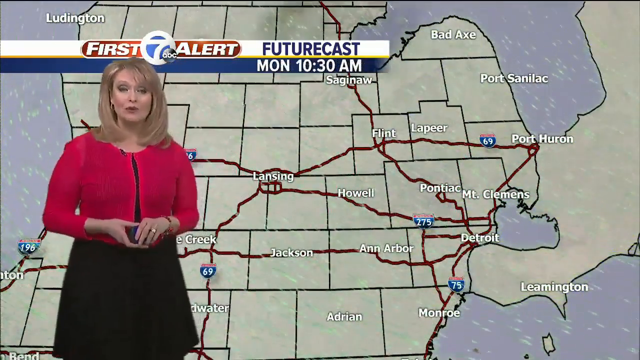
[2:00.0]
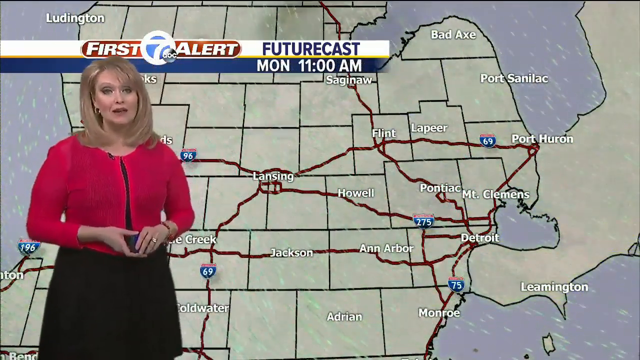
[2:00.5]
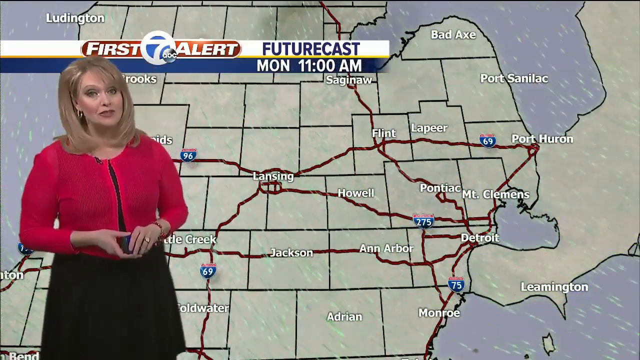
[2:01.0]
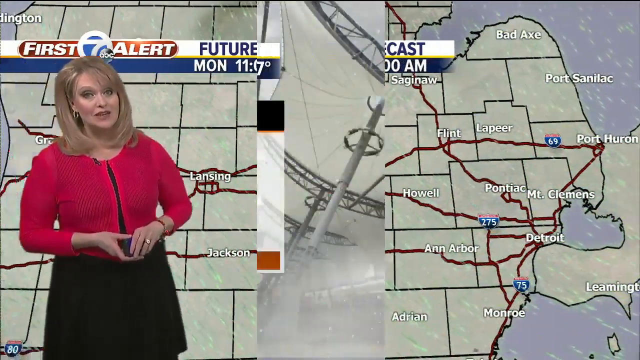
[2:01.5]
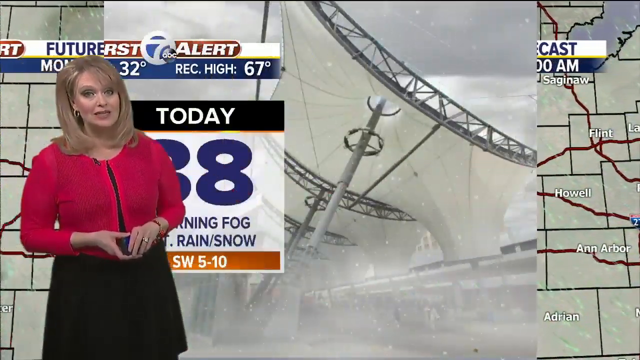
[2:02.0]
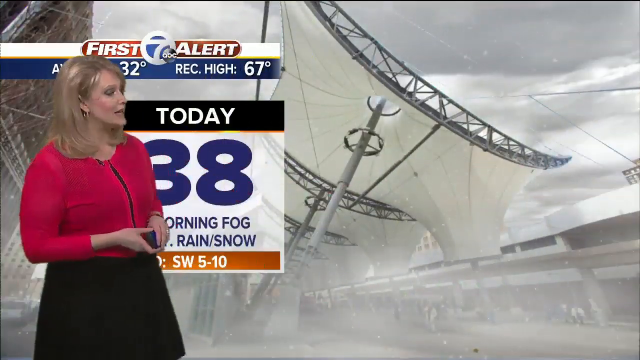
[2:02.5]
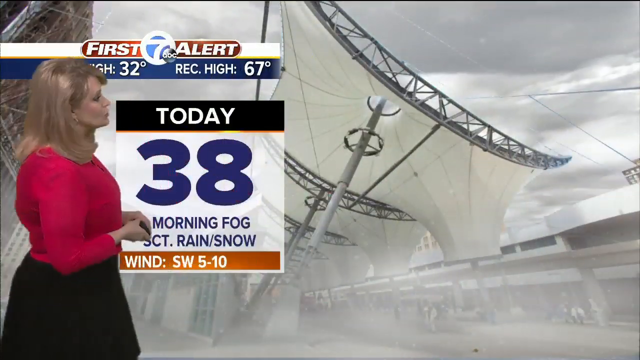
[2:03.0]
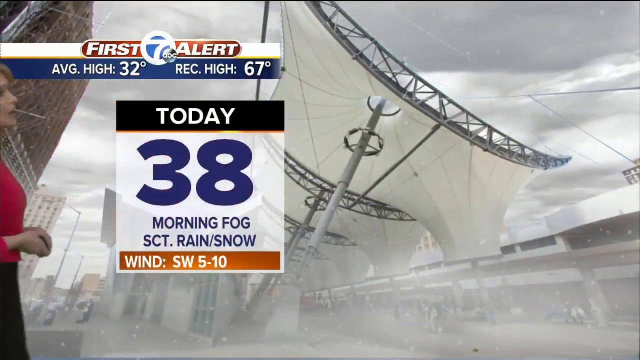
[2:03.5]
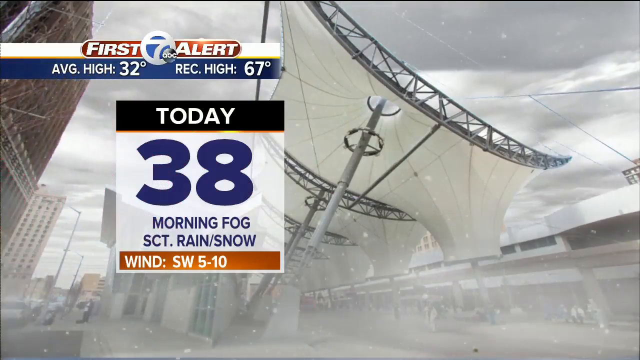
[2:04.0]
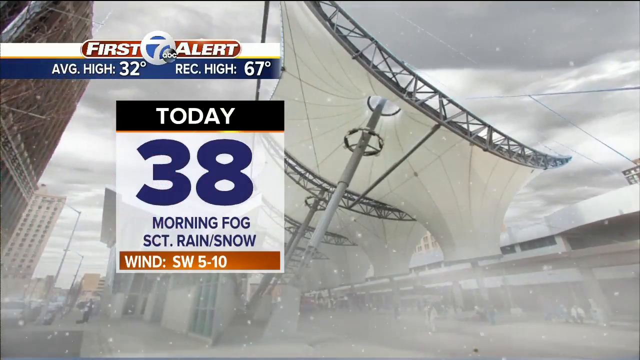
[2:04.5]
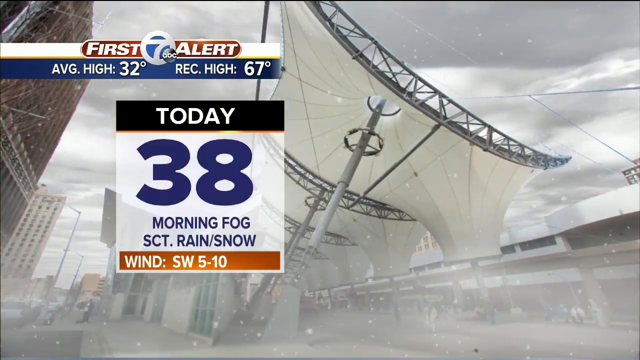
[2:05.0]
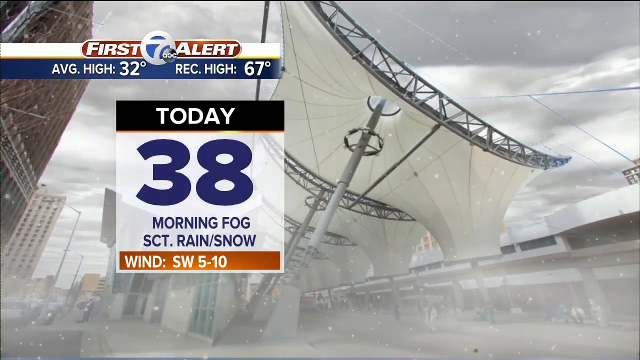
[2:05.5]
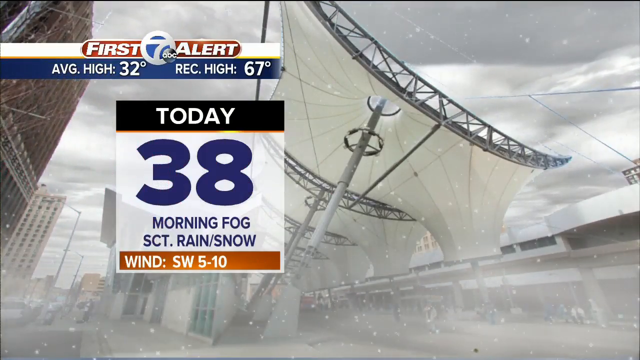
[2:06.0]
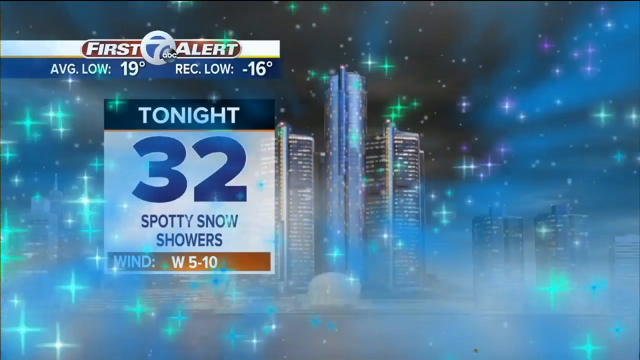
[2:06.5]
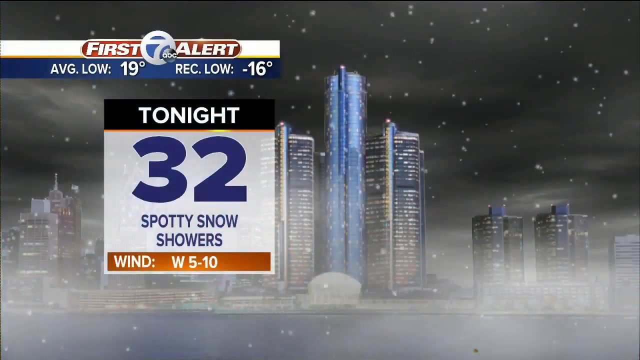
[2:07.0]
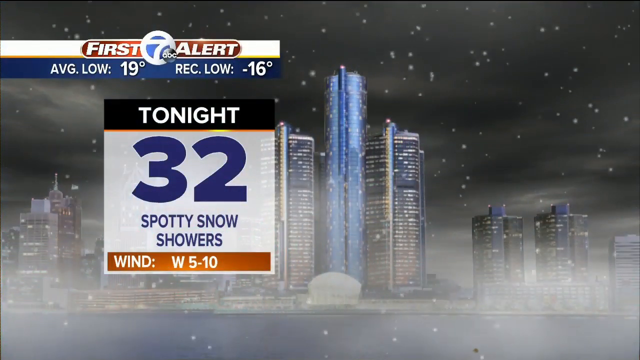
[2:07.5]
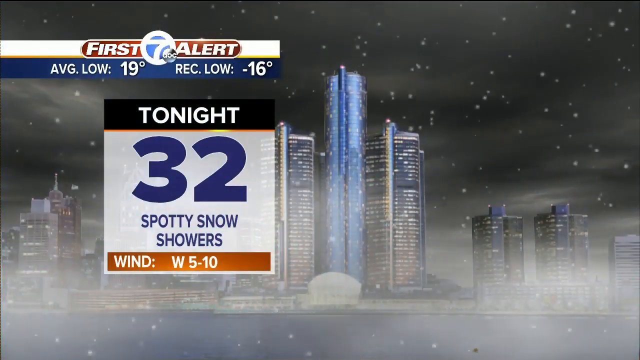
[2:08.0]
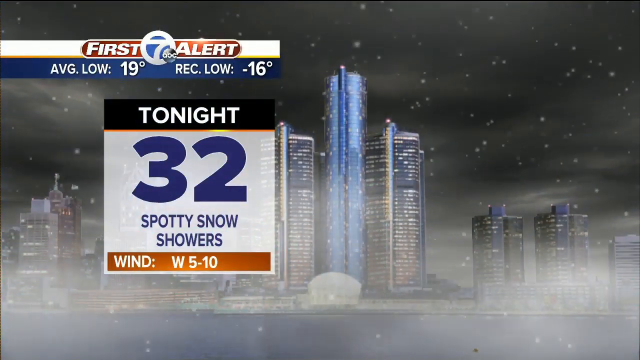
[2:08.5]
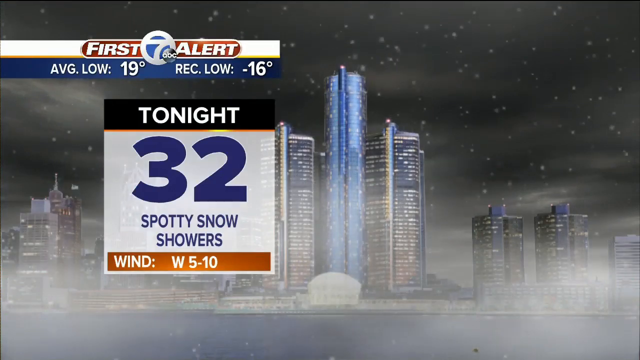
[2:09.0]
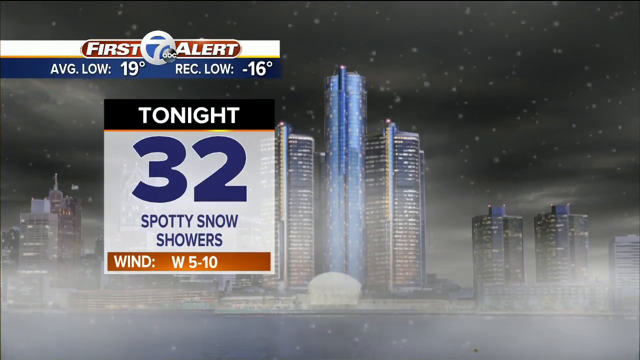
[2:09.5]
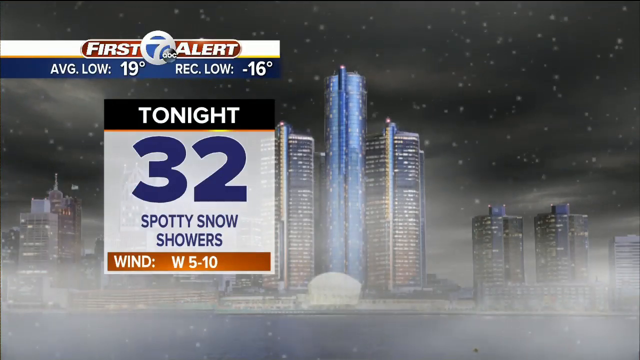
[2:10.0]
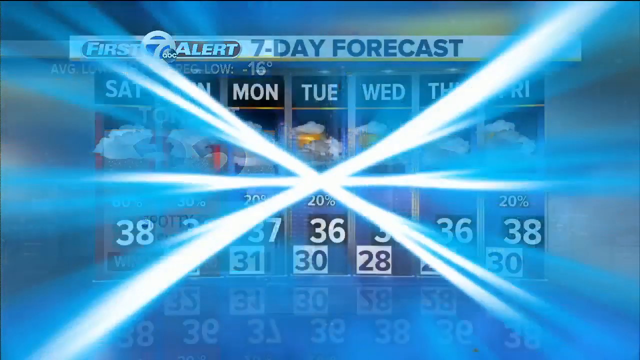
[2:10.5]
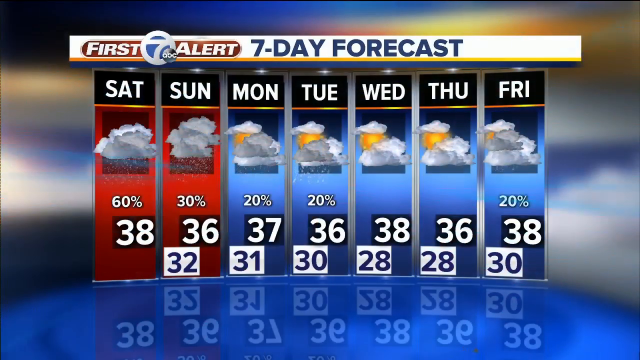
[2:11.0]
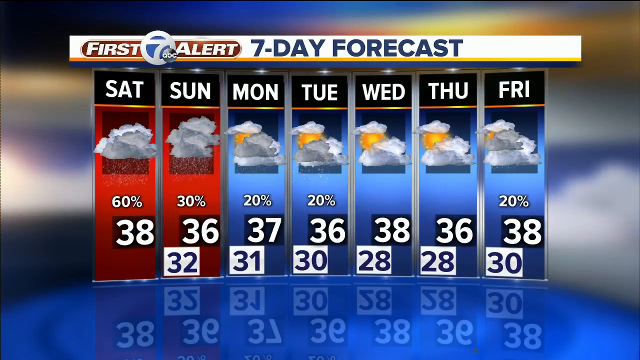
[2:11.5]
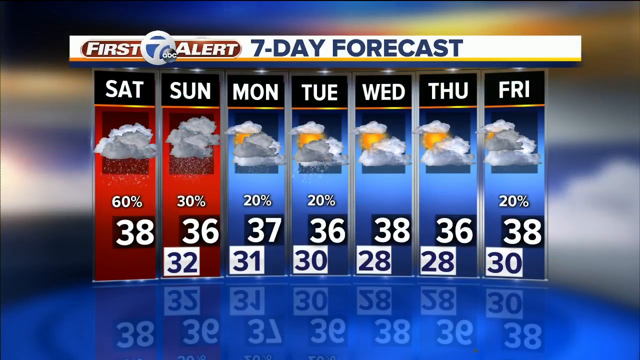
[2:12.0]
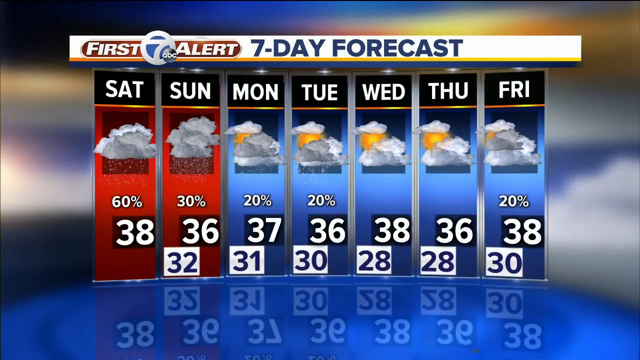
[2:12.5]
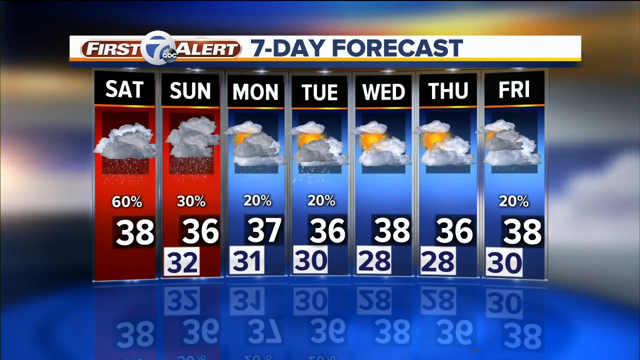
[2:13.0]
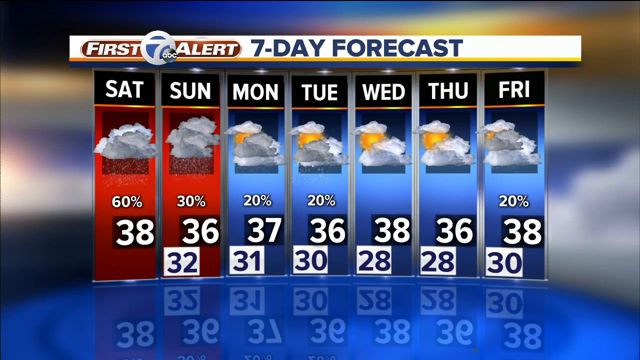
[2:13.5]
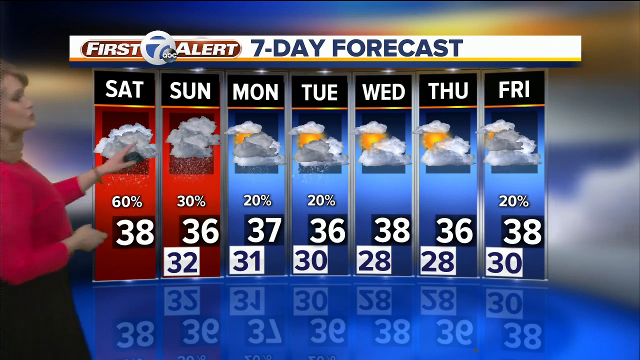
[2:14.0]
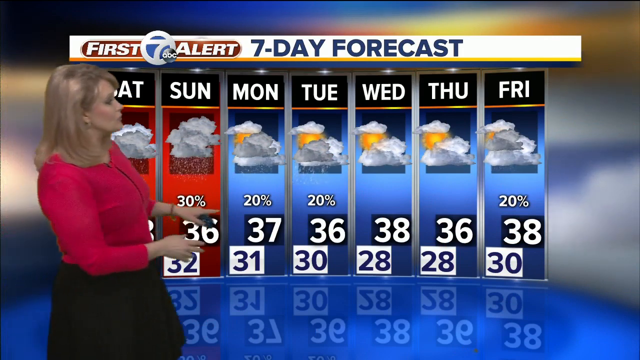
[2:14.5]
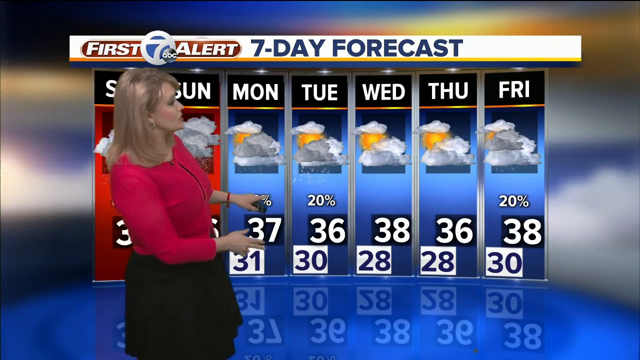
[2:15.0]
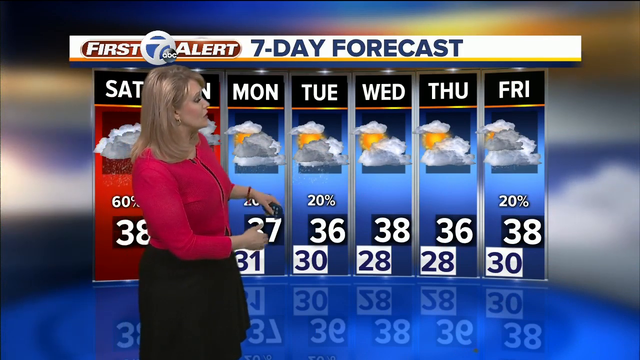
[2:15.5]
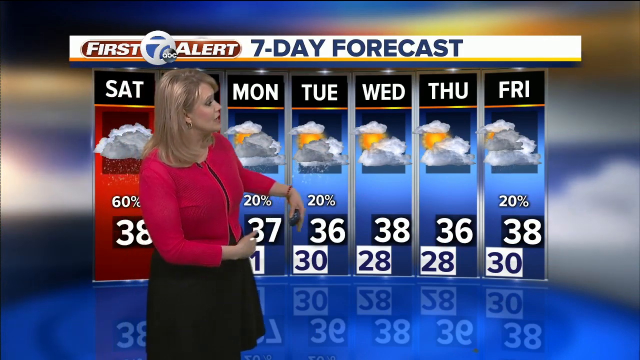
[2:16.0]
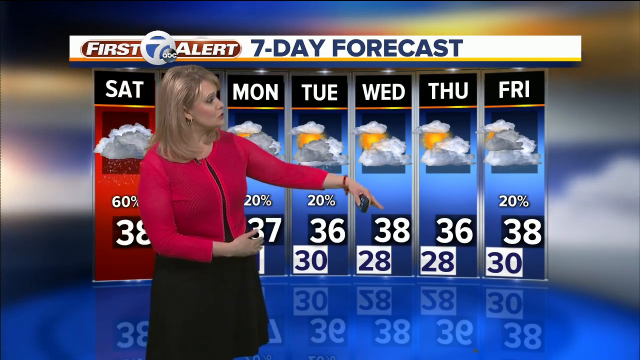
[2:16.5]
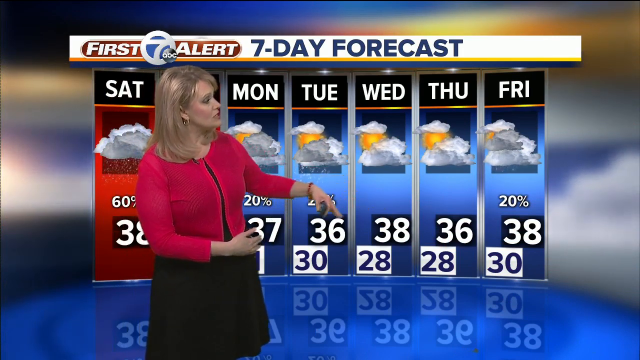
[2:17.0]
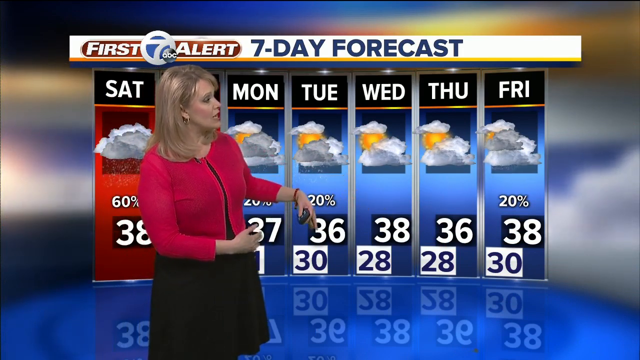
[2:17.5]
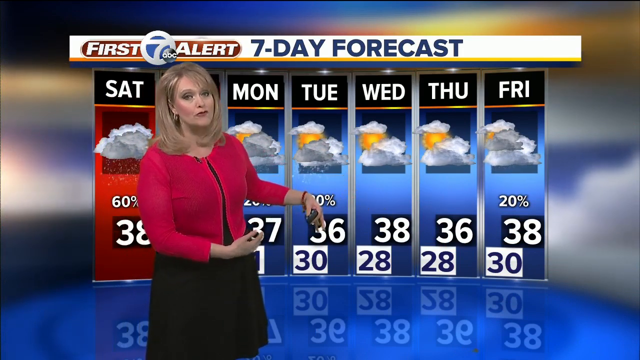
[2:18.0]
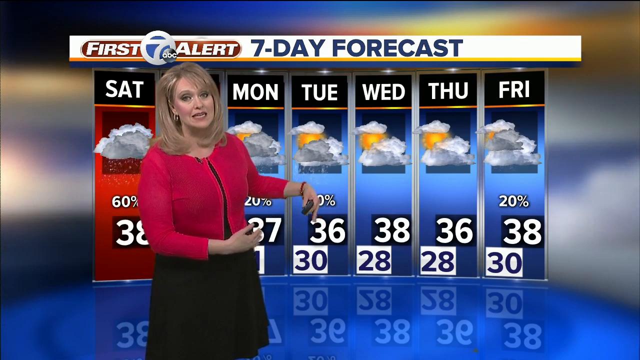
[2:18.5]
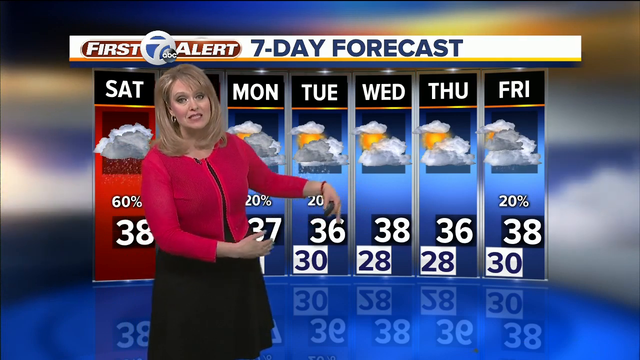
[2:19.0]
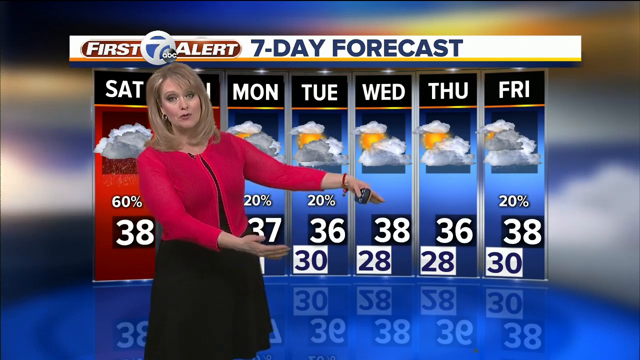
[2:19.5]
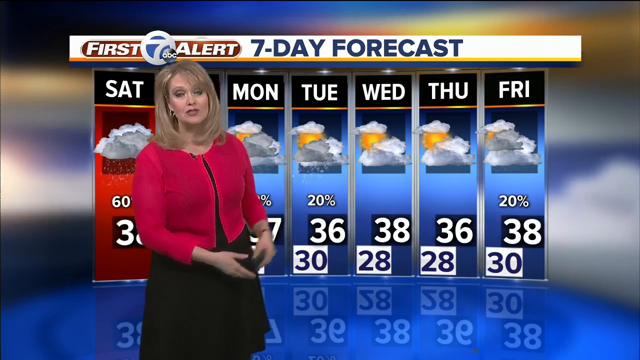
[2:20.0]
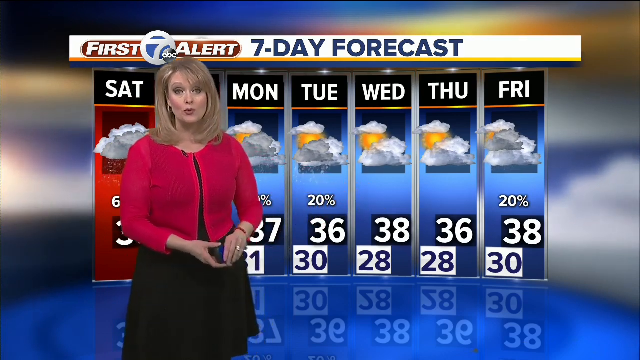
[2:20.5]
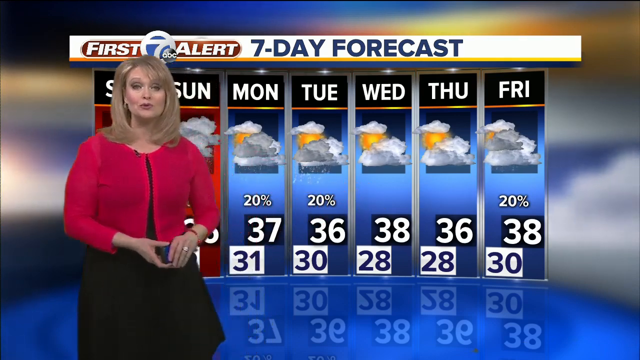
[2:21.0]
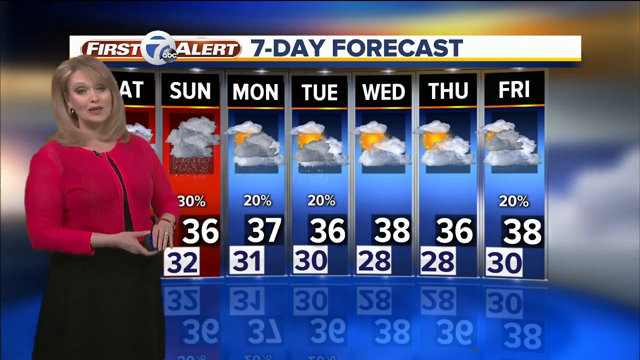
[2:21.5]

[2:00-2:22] The segment ends with today's weather: 38 degrees with morning fog, and tonight 32 degrees with spotty snow showers. A seven-day forecast follows, with rain or sleet at a high chance on some days and a low chance on others.